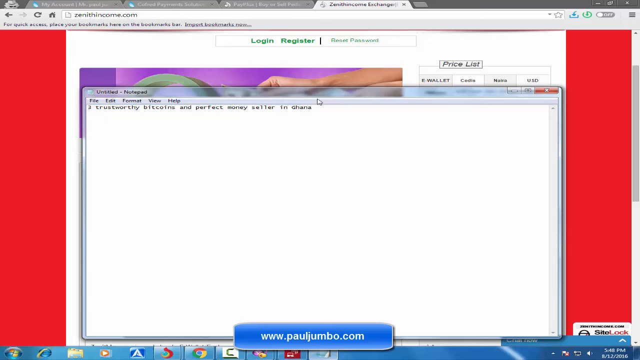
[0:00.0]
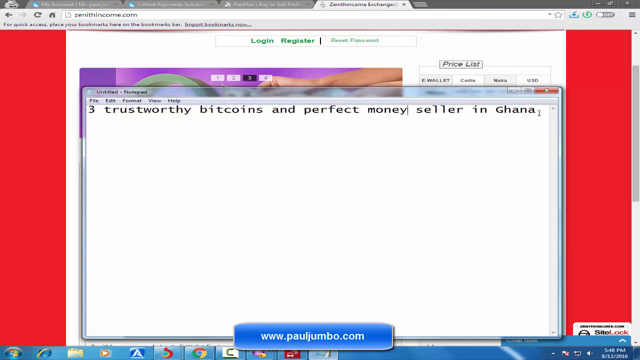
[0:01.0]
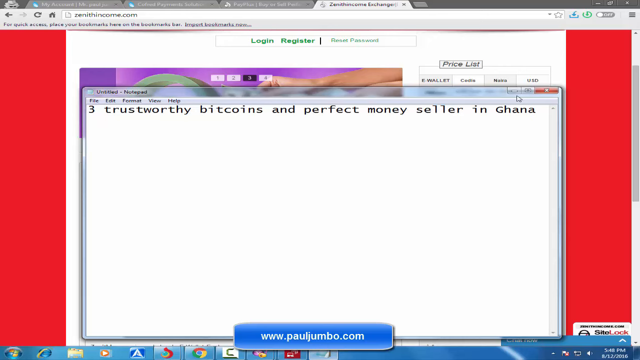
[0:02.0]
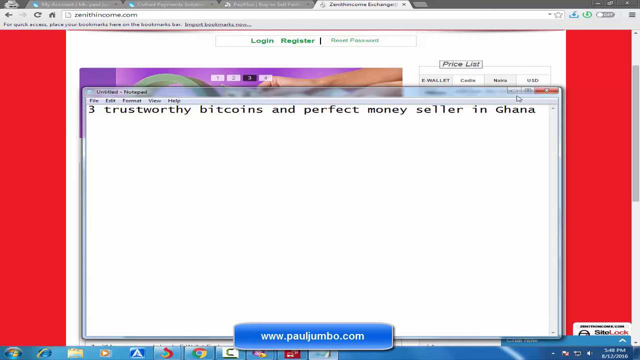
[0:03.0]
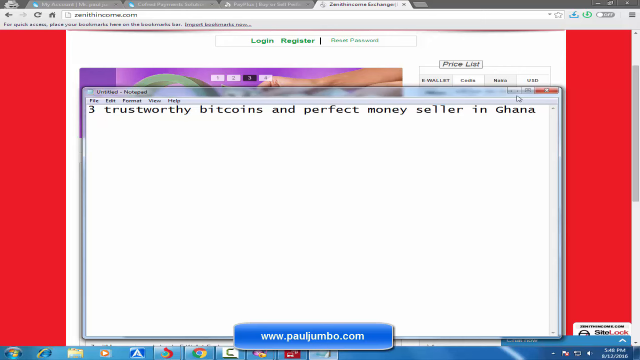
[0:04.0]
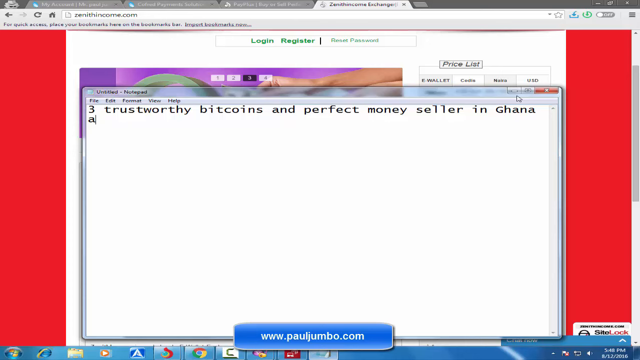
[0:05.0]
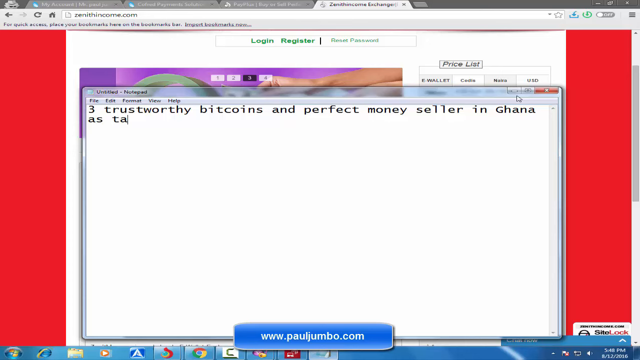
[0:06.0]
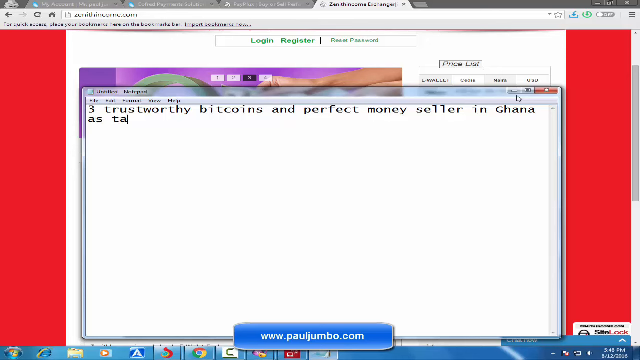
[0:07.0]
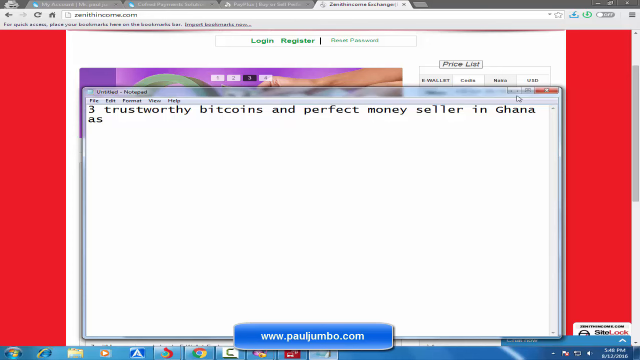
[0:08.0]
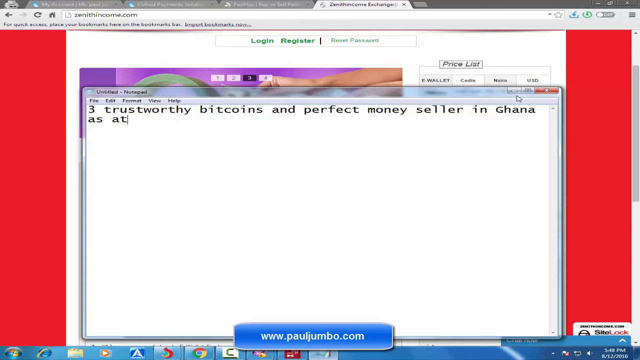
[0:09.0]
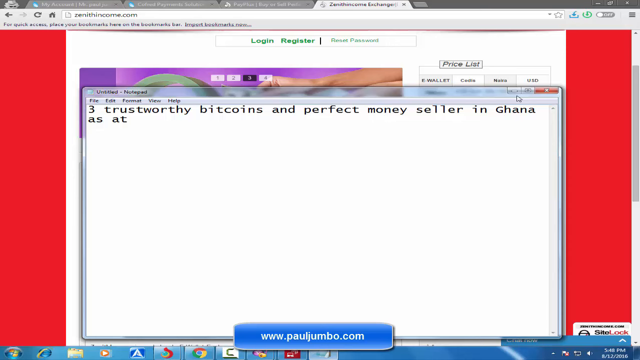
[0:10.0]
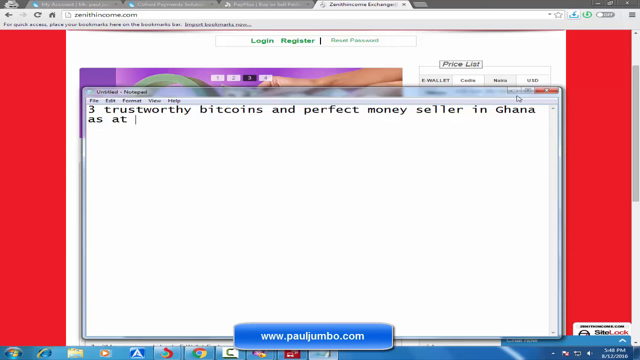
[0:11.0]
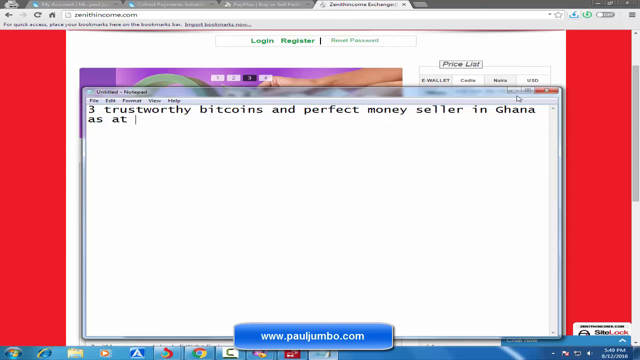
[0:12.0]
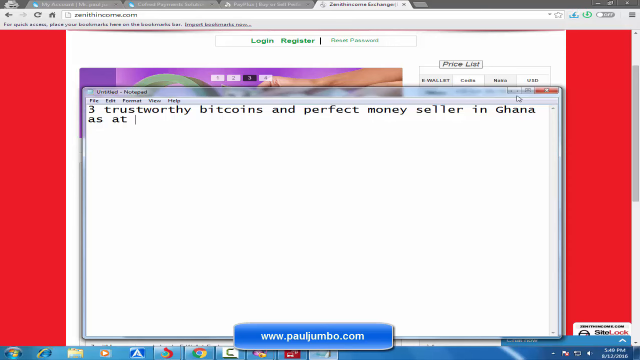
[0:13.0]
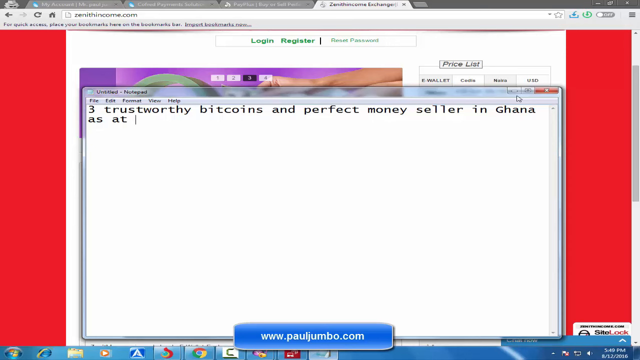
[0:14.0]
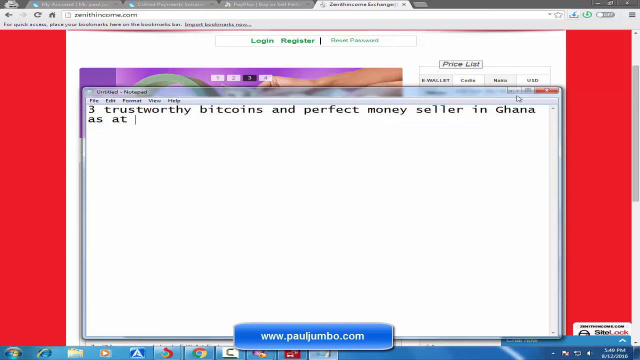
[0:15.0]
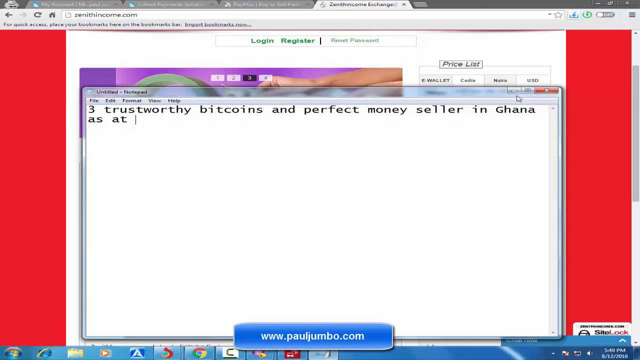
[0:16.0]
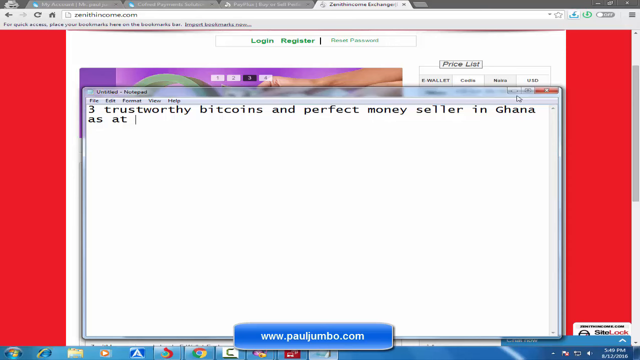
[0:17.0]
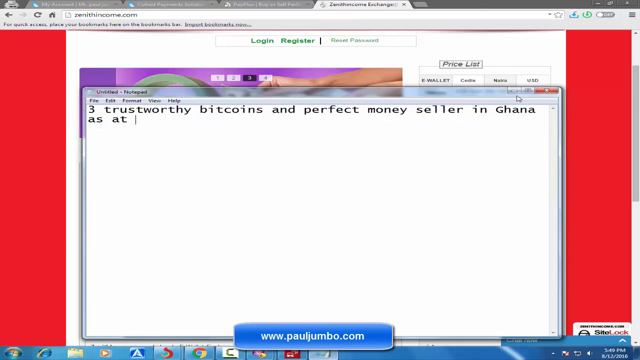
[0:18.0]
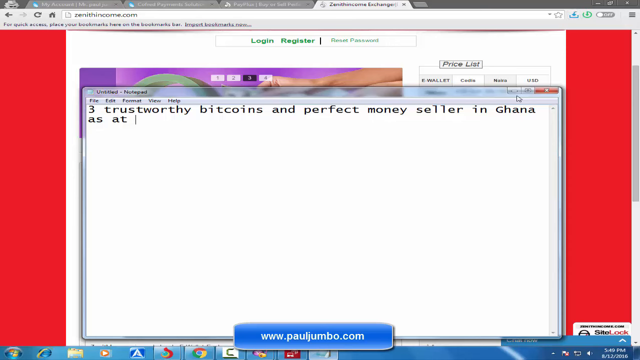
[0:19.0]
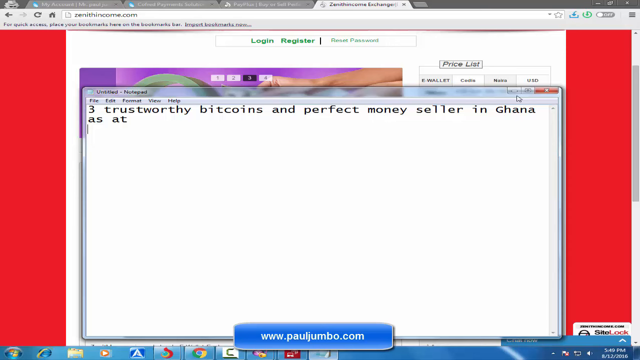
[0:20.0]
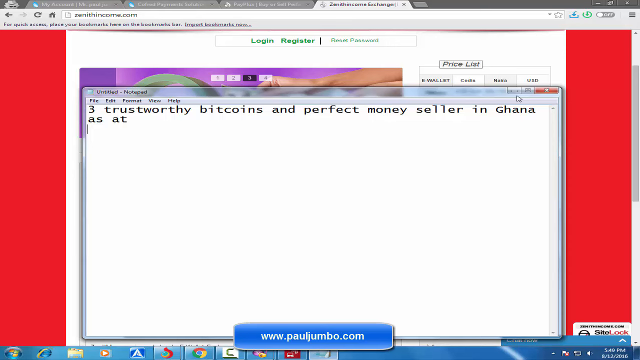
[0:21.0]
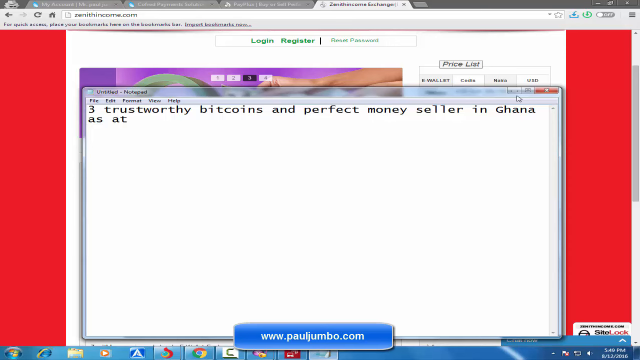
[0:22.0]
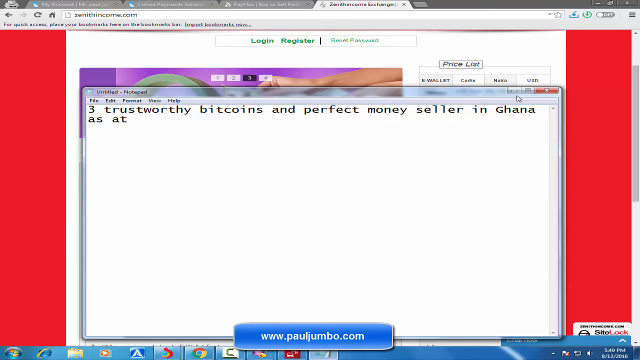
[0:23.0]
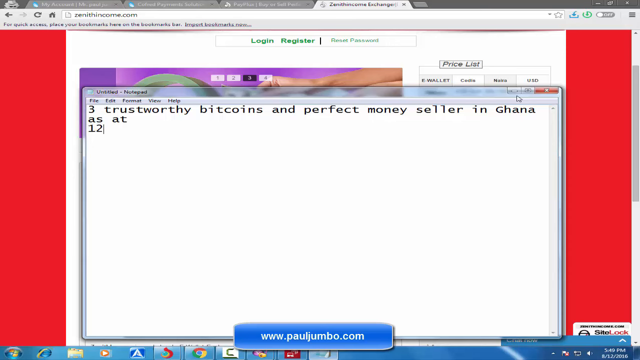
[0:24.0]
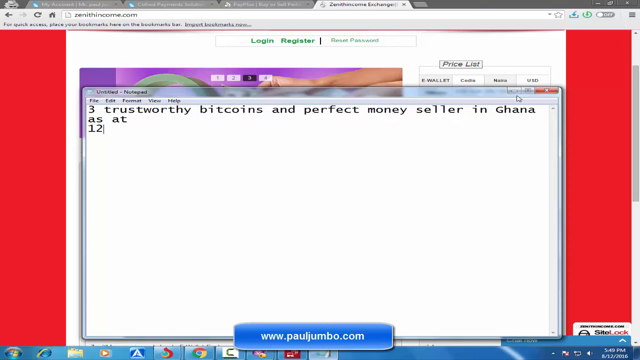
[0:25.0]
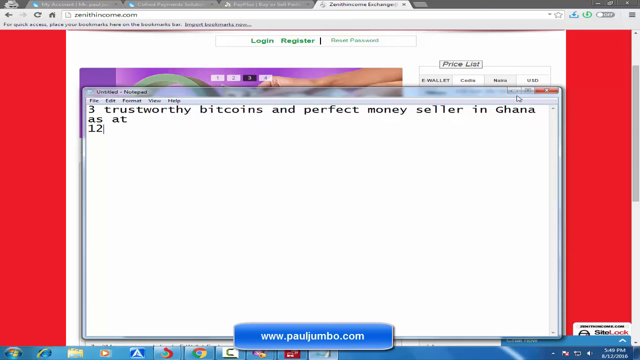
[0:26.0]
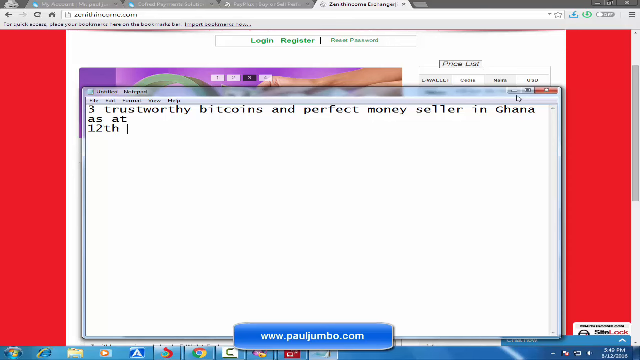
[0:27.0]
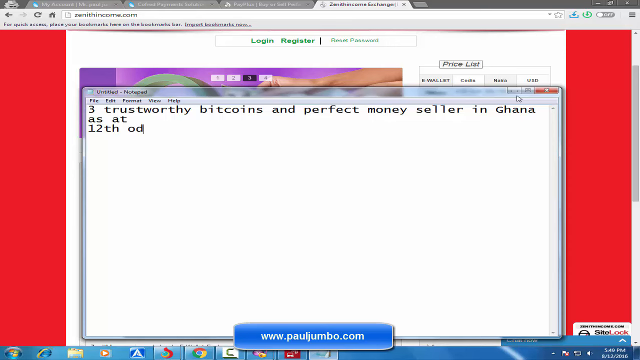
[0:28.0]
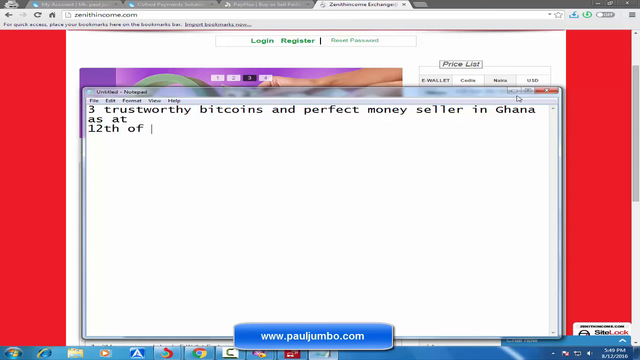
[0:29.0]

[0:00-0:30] A computer screen is shown, with the top eighth of the page looking like the top of a computer browser. There are four open tabs at the top, and the fourth tab is the one shown being clicked; the other three tabs each have little colors on them. Right below that is an arrow pointing to the left and then a smaller world globe tab, and there is a bar with the .com address that has been visited. In the main portion of the screen is a blank white paper, and behind that is a purple backdrop. Something skin-colored comes from the right corner of that smaller segment. The text reads "three trustworthy bitcoins and perfect money seller in Ghana", with a flashing cursor waiting as someone types. Then it clicks and goes to a very small sentence at the top left of the screen. Above that, to the right of the picture, it says "login, register / reset password".